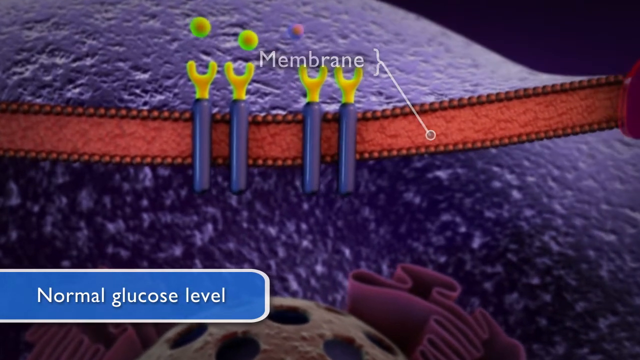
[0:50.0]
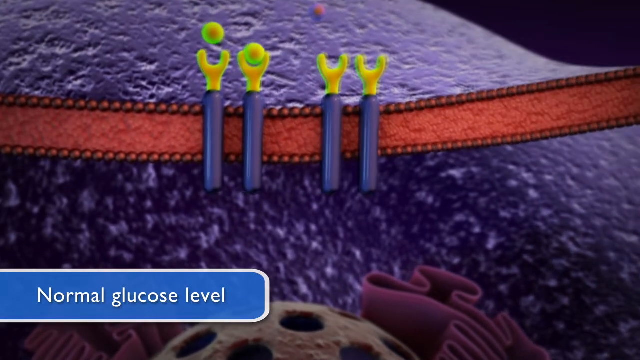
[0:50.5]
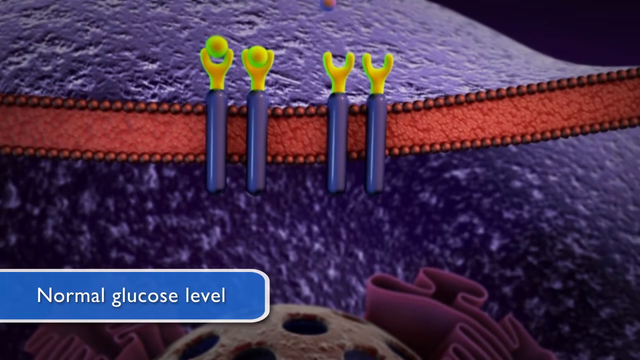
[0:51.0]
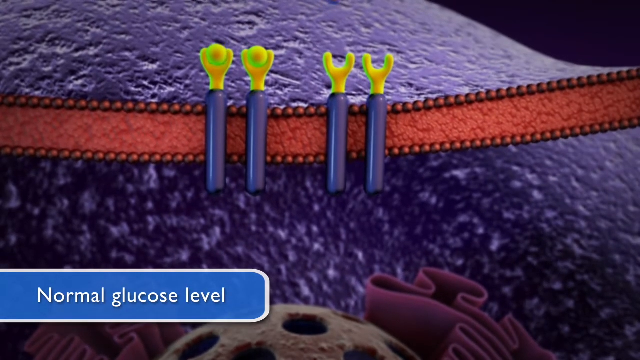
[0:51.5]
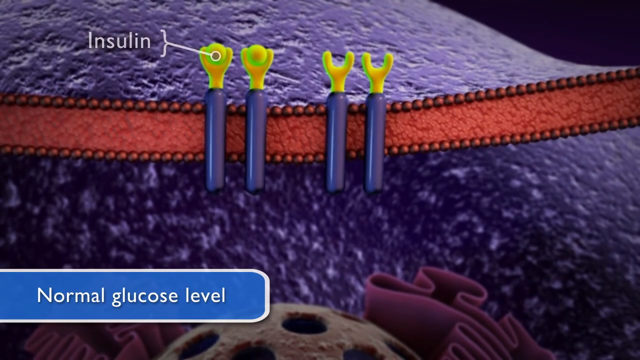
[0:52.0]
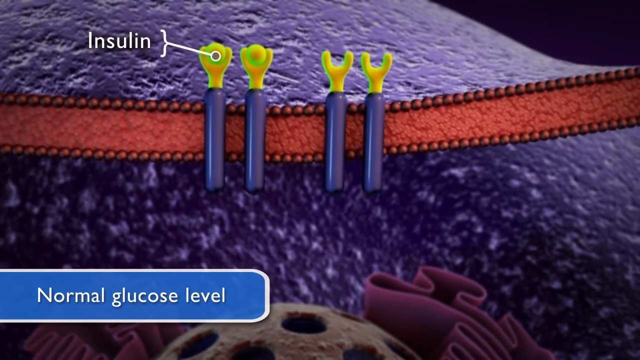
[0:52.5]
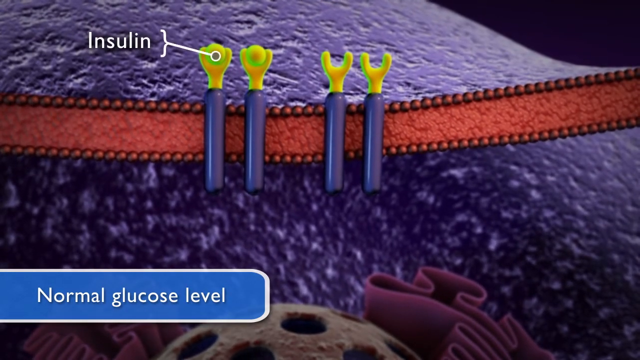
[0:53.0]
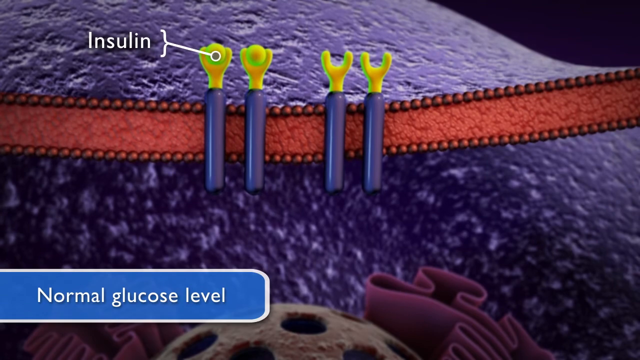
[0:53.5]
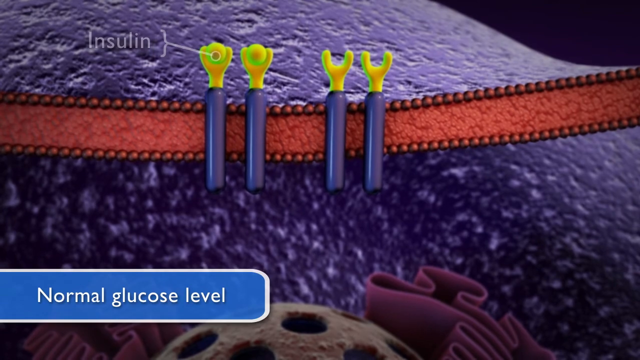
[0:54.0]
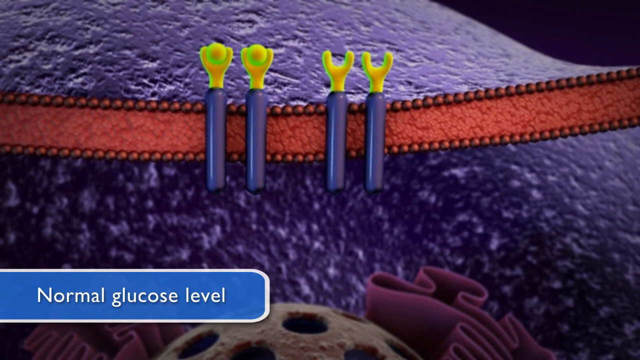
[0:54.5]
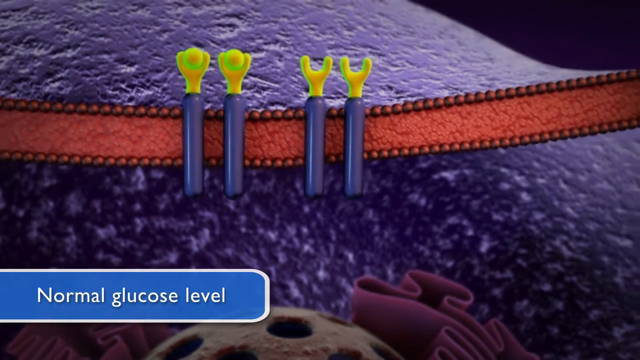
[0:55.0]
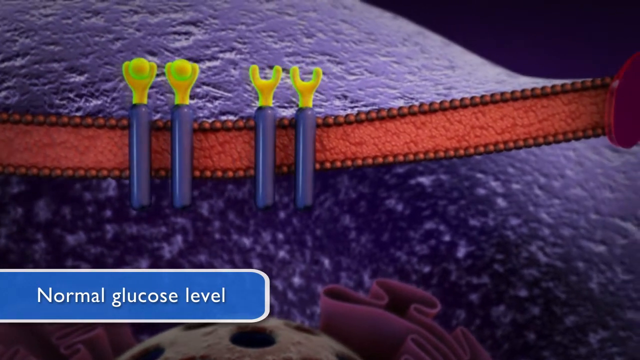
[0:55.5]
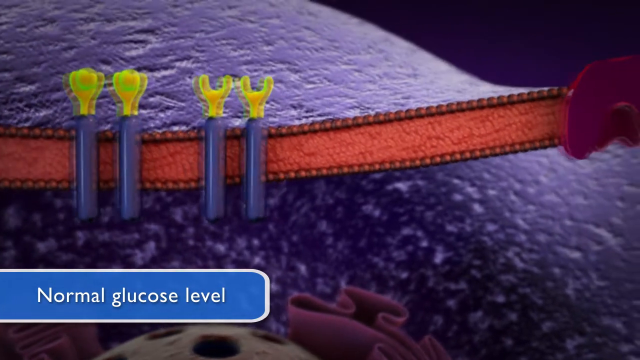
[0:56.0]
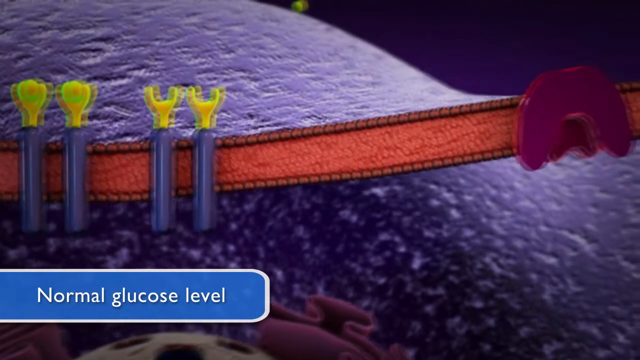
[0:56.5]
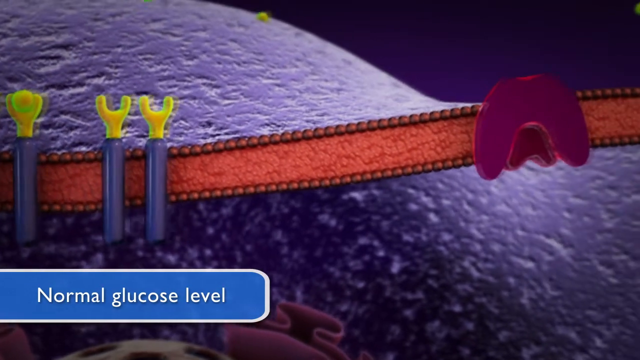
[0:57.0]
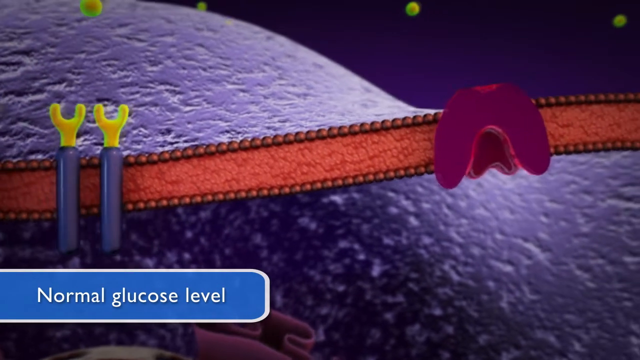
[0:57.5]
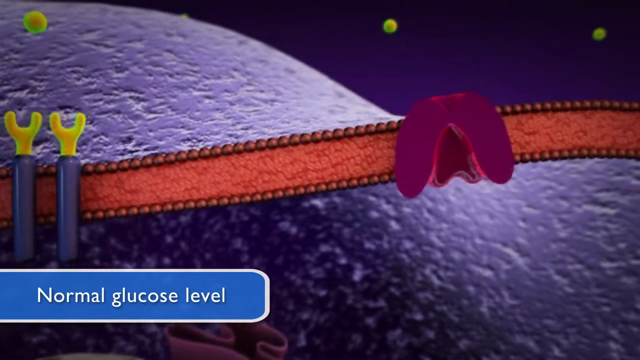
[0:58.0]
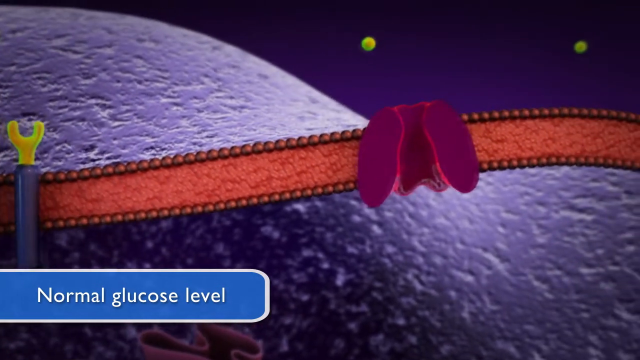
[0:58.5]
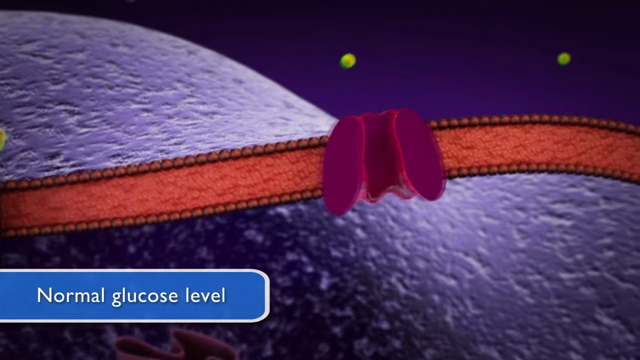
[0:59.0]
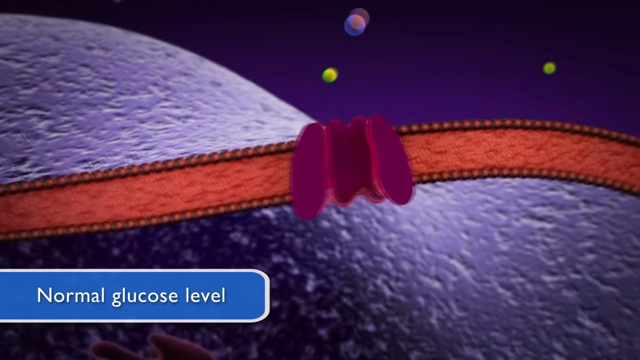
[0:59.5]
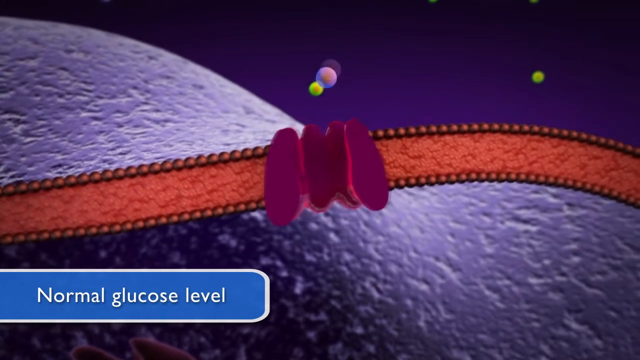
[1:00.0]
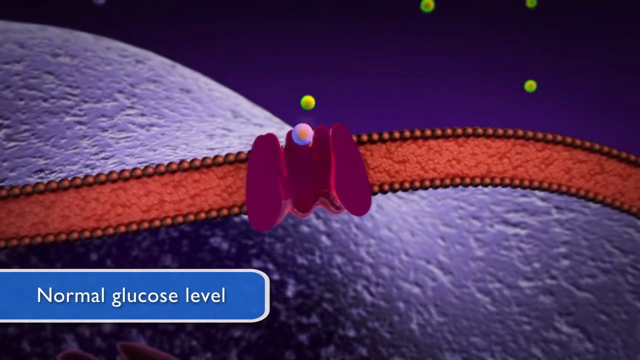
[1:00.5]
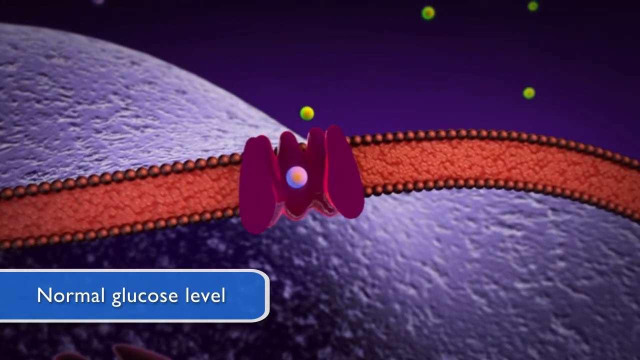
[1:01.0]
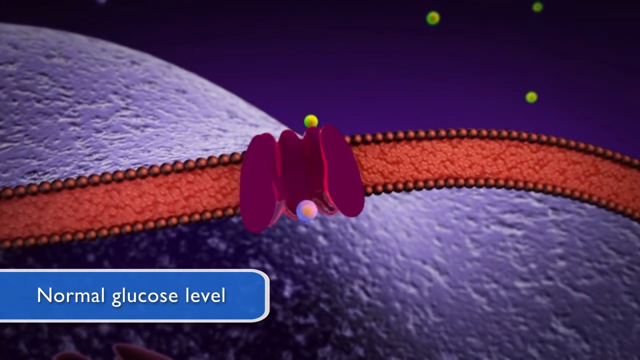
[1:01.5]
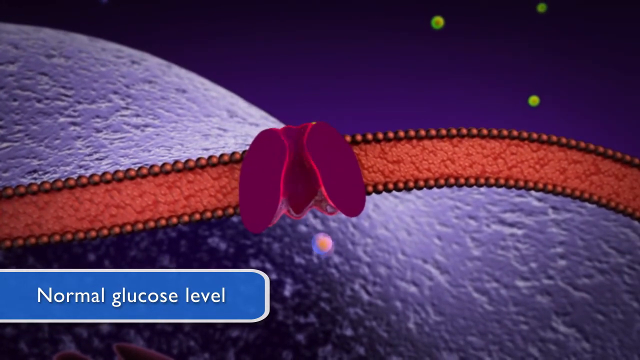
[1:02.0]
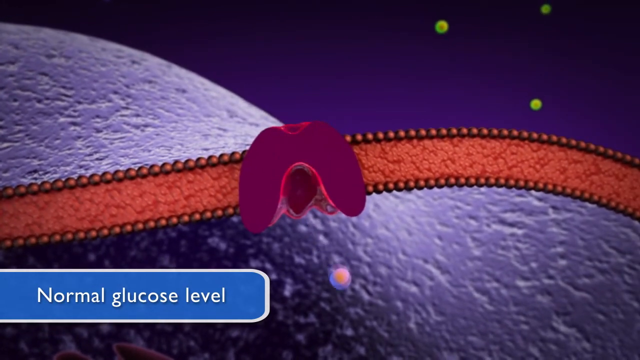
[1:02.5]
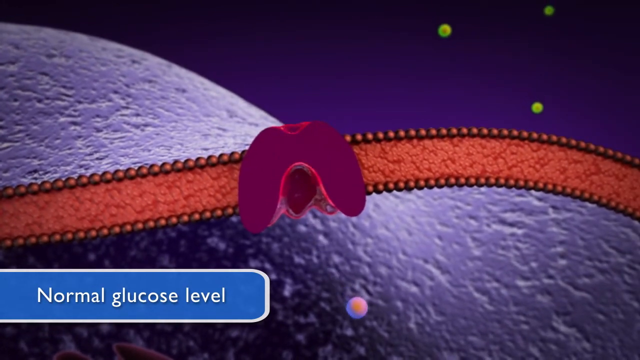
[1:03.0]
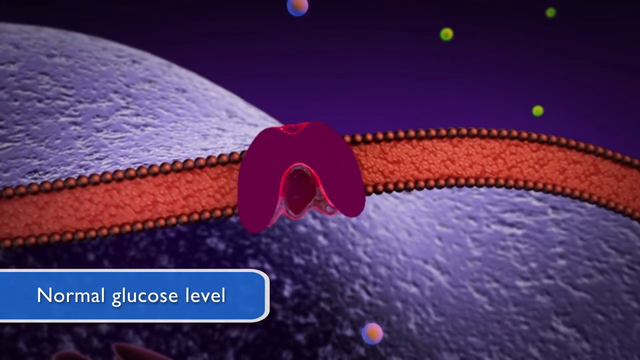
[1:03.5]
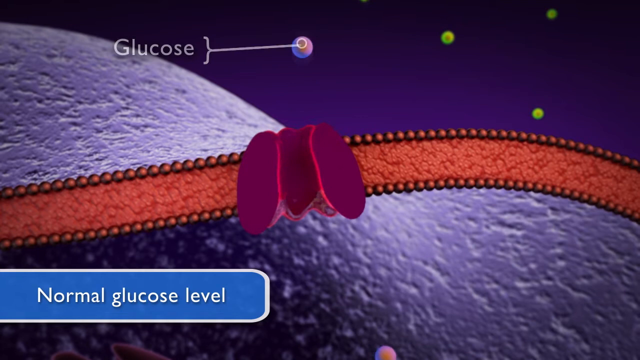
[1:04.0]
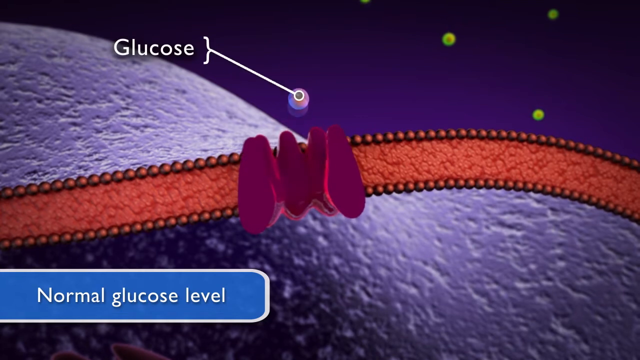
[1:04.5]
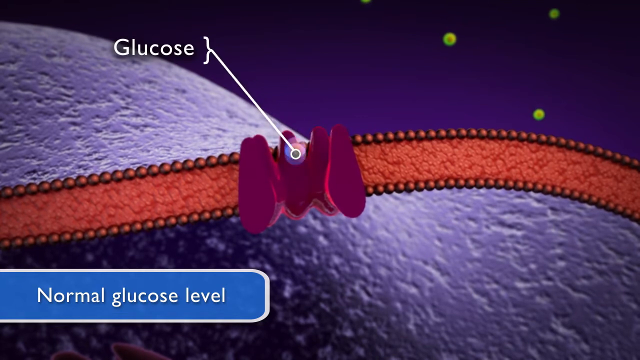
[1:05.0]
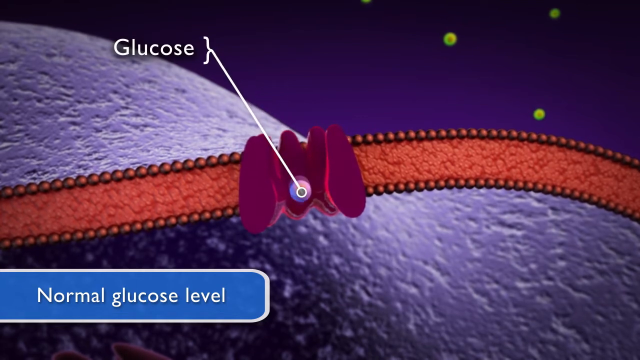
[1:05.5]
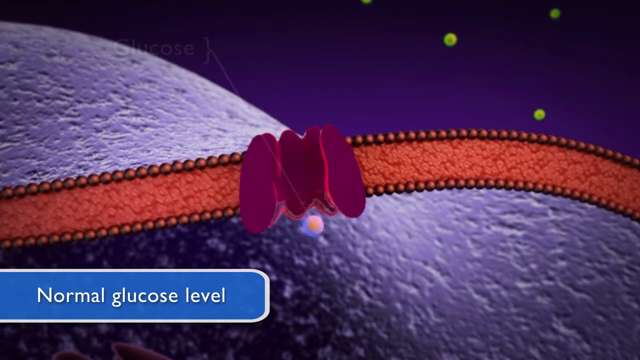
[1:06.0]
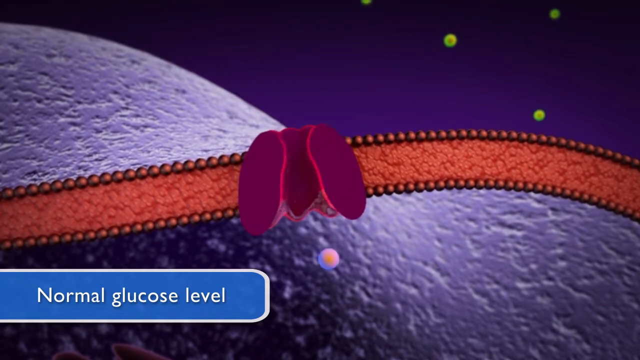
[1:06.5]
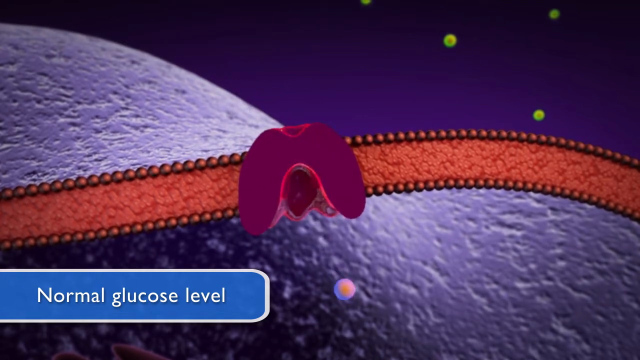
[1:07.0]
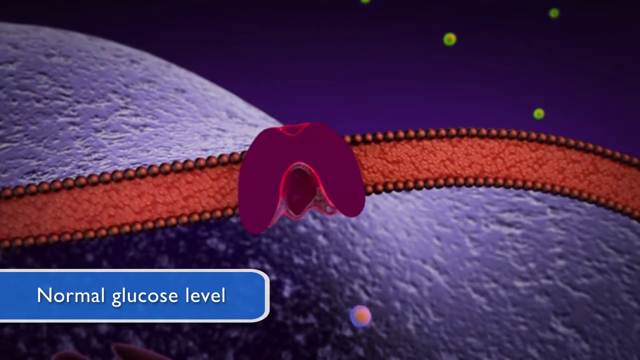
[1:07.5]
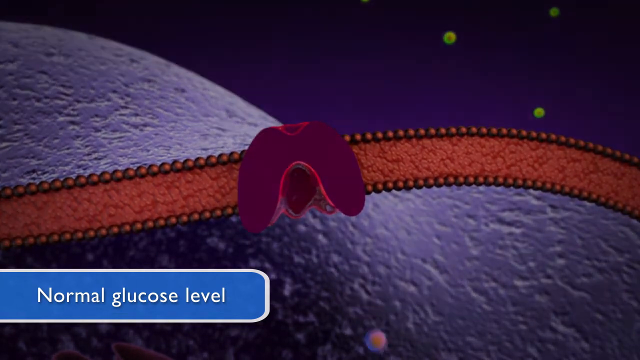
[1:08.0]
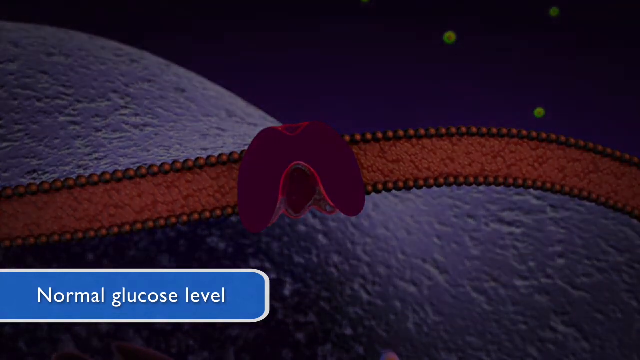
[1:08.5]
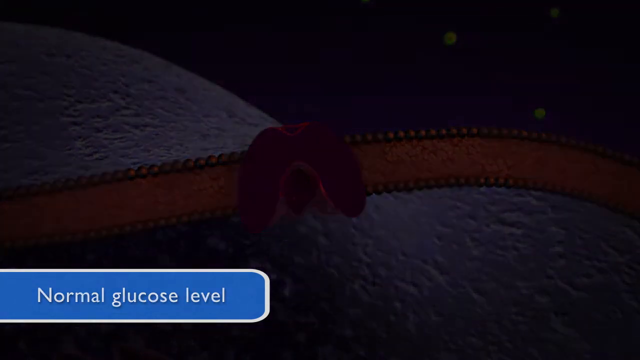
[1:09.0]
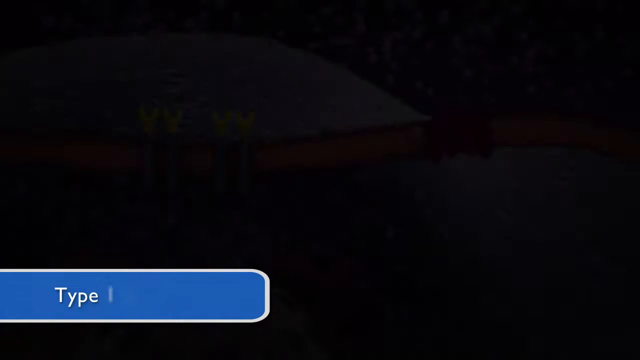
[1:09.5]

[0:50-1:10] The animation of what a normal glucose level looks like continues. The purple background looks like a rocky mountain or hill but seems to represent something inside the human body. Across the centre, from left to right, is what looks like a mottled red ribbon, and at the top centre of the screen white text says "membrane" with a white line pointing at the ribbon. To the left are four blue sticks laid vertically across the ribbon, each topped with a yellow U-shaped hook. Above them, two yellow balls suspended in the air gradually settle inside the two leftmost hooks. A horizontal blue rectangle in the lower left-hand corner shows the words "normal glucose level" in white text. The word "insulin" then appears in white text in the top left-hand corner, with a white line pointing to the yellow dots settling inside the hooks. The view pans to the right of the ribbon, revealing a purple blob that looks like two doors, which open to receive glucose. The glucose is represented by purple floating blobs that move downwards; the word "glucose" appears in white text at the upper left of the screen, with a white line pointing to the purple ball as it descends through the doorway. The ball then sinks to the bottom of the screen.